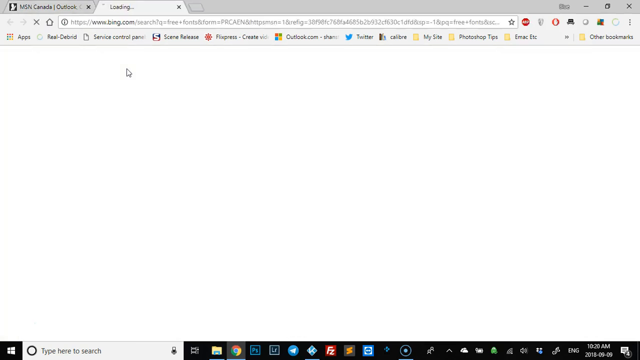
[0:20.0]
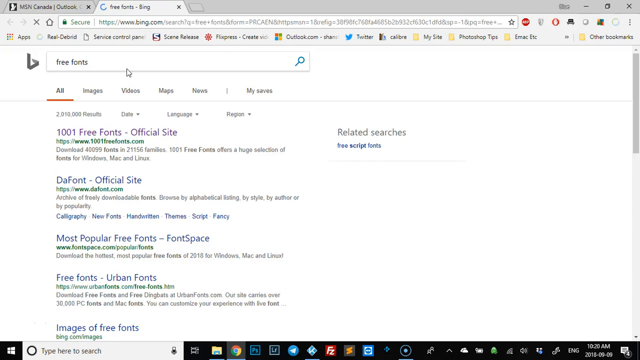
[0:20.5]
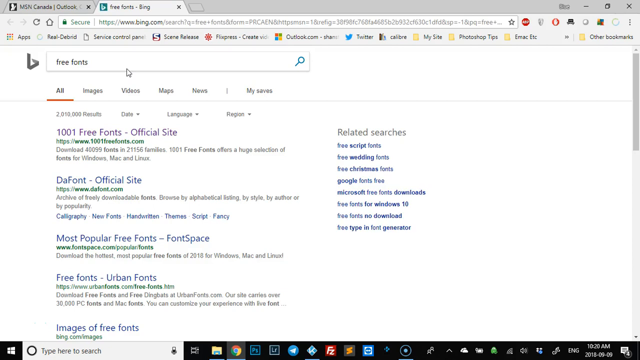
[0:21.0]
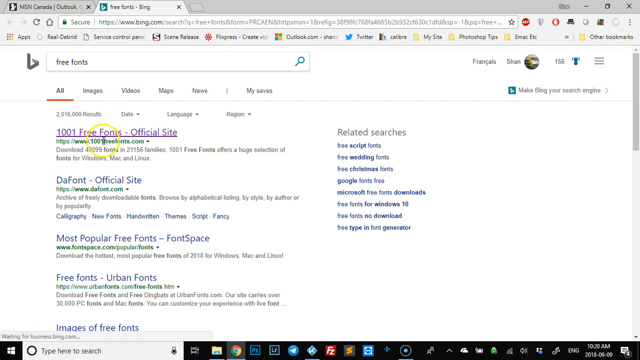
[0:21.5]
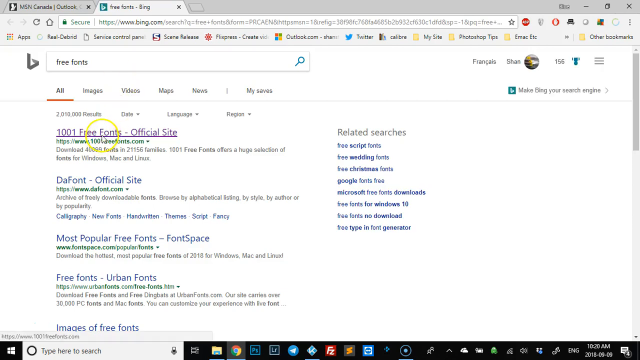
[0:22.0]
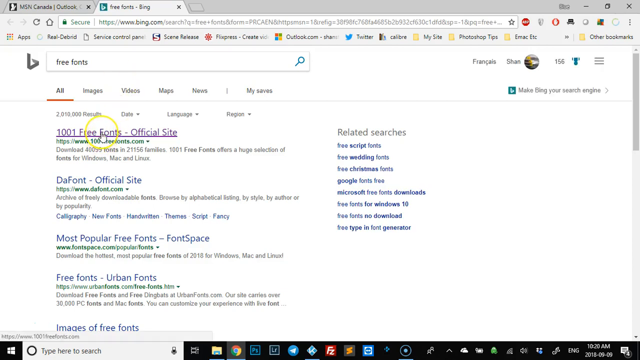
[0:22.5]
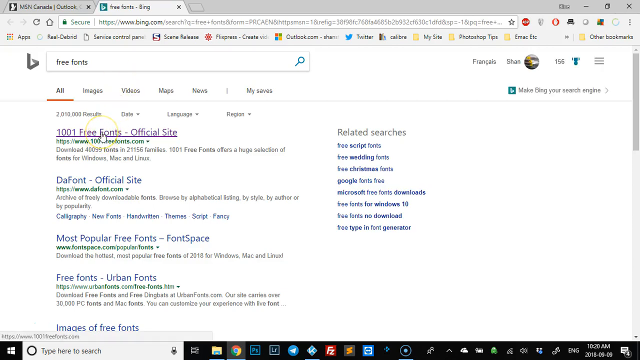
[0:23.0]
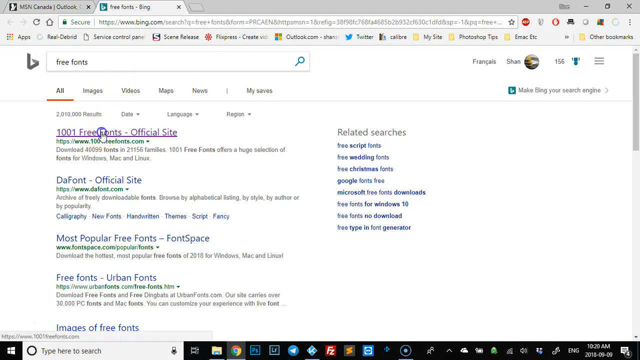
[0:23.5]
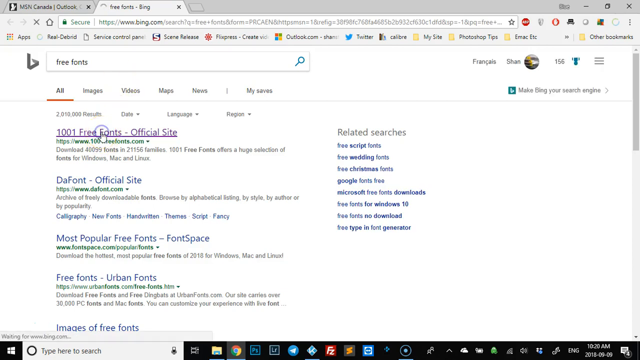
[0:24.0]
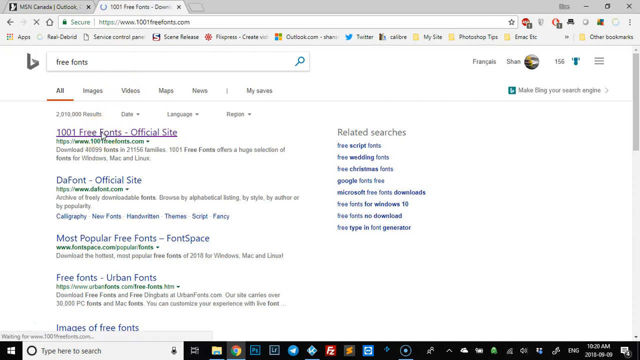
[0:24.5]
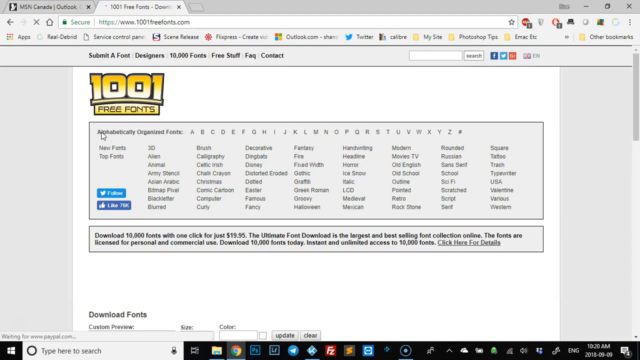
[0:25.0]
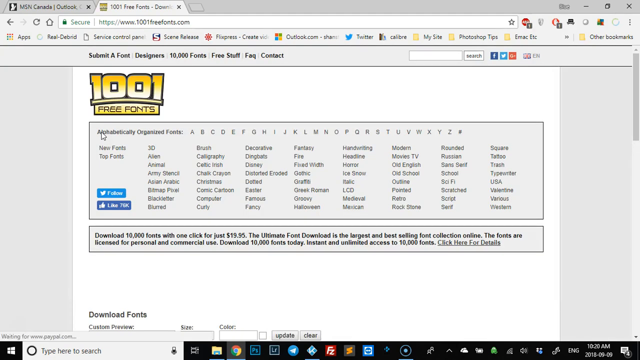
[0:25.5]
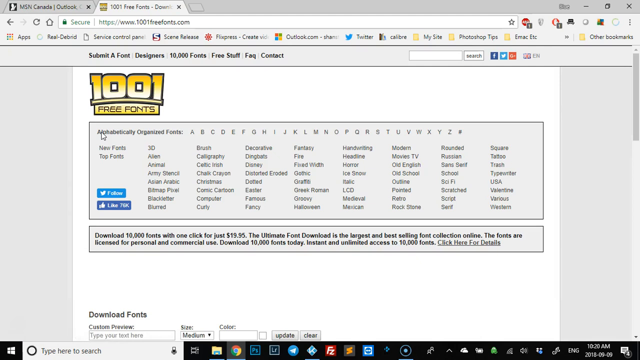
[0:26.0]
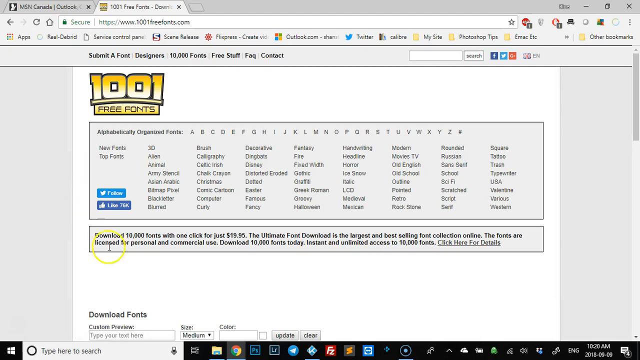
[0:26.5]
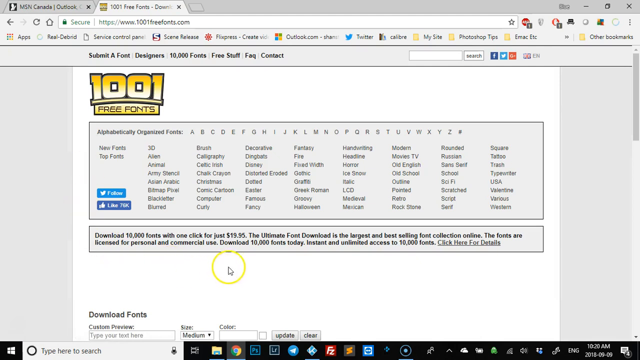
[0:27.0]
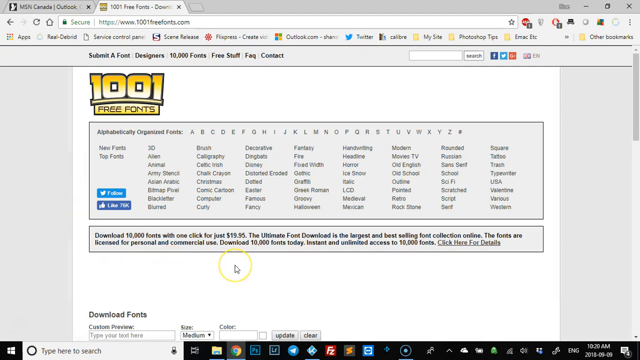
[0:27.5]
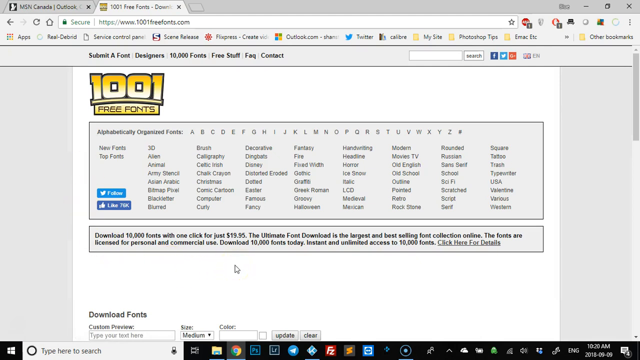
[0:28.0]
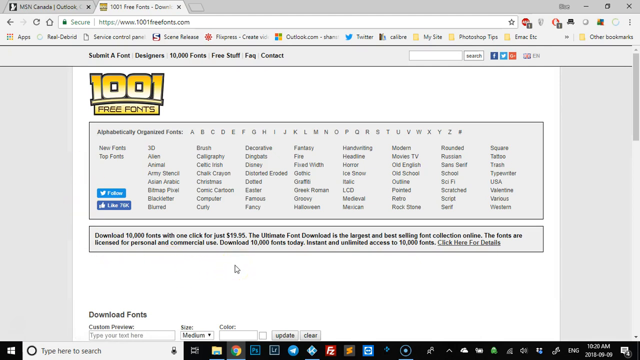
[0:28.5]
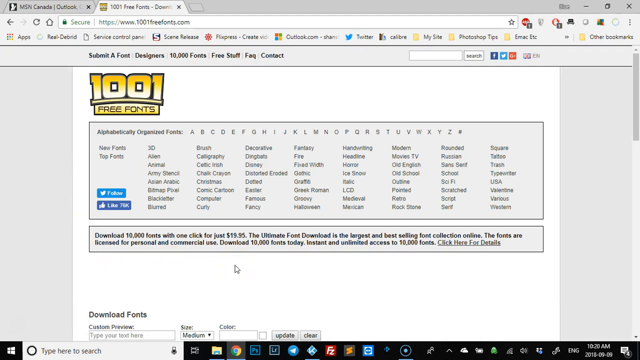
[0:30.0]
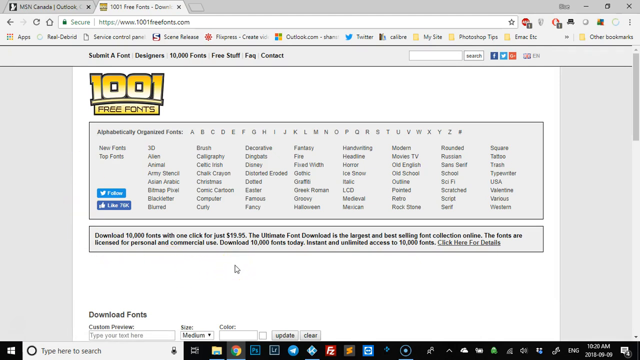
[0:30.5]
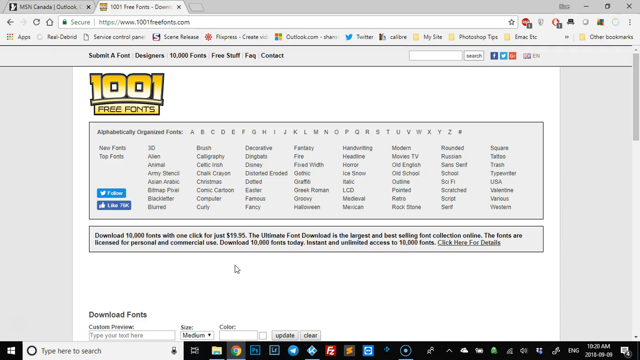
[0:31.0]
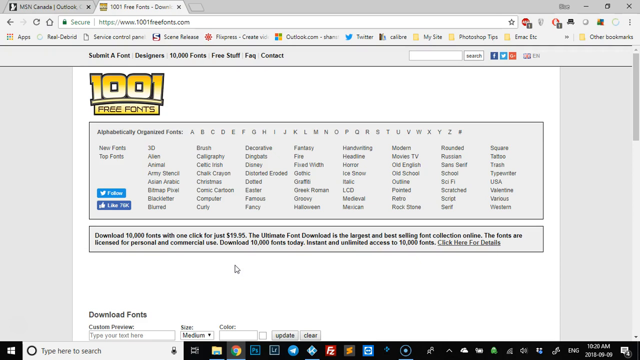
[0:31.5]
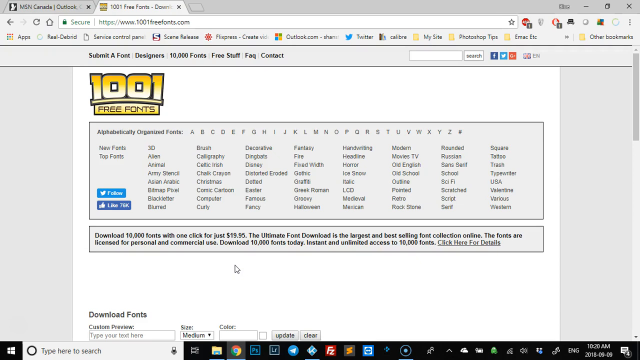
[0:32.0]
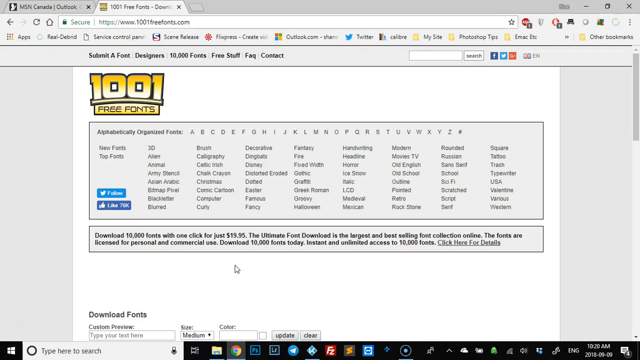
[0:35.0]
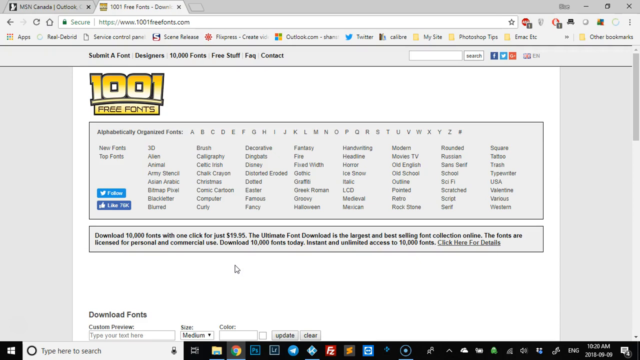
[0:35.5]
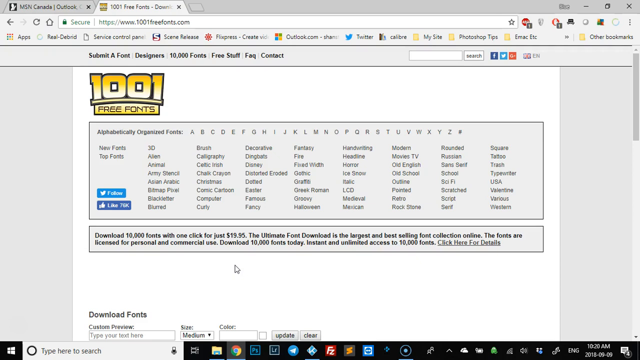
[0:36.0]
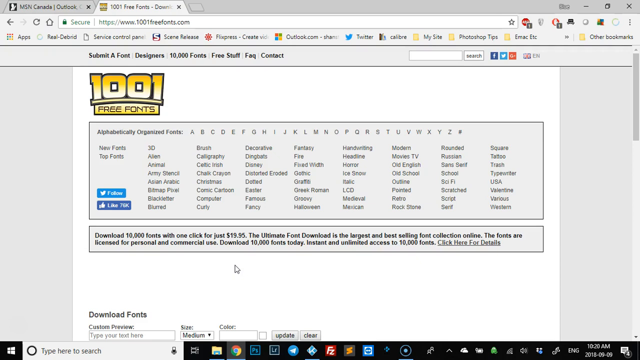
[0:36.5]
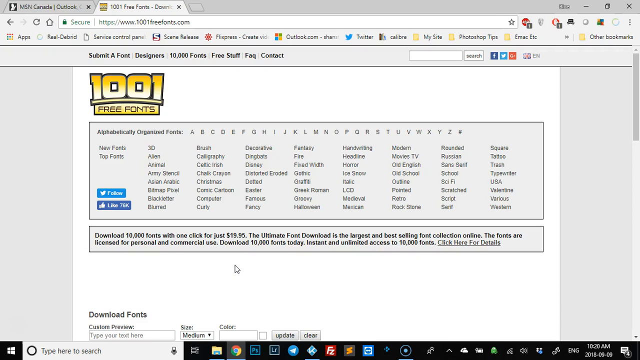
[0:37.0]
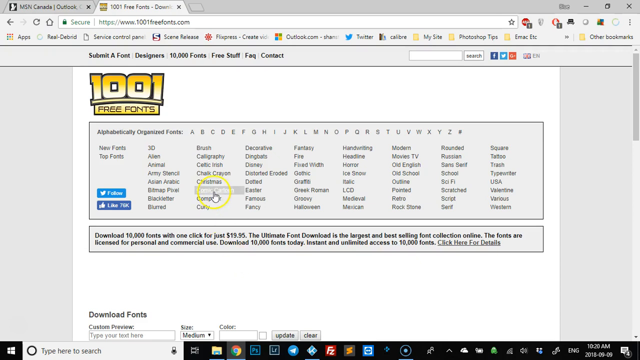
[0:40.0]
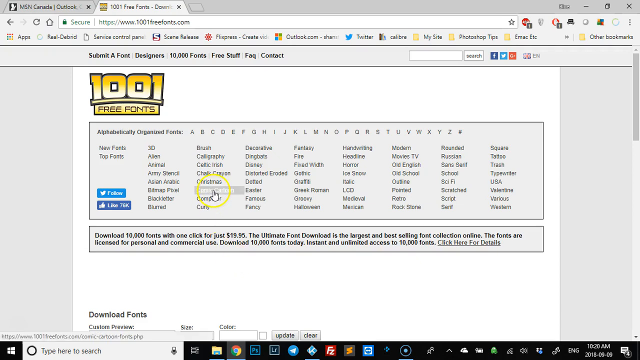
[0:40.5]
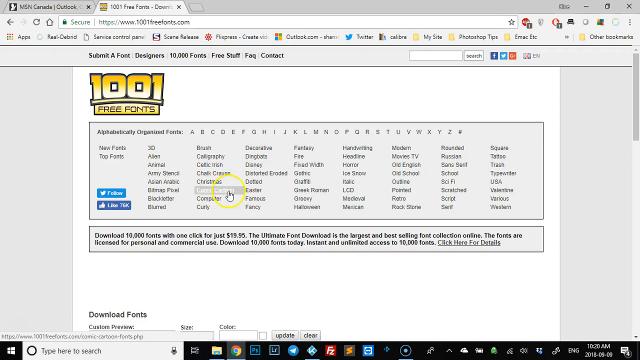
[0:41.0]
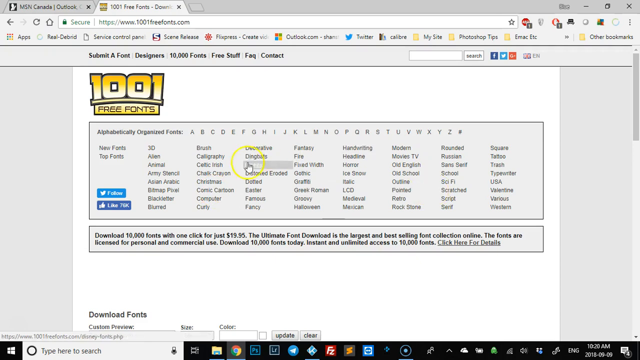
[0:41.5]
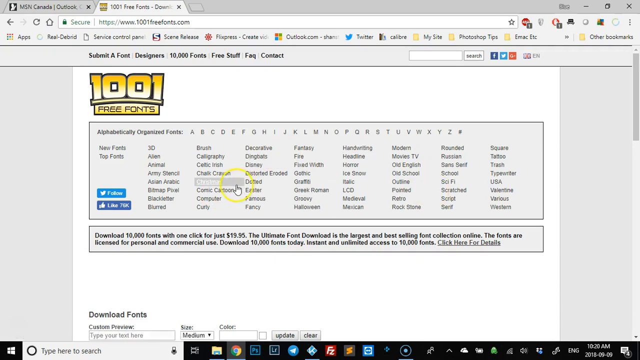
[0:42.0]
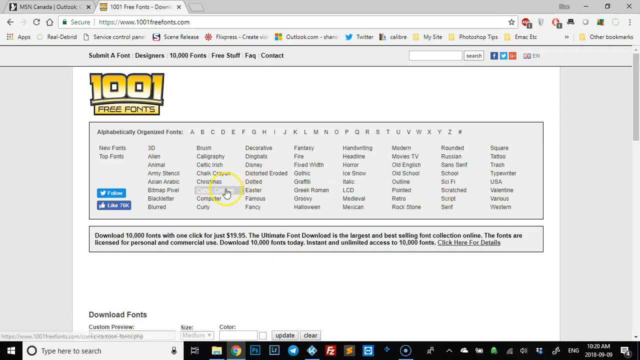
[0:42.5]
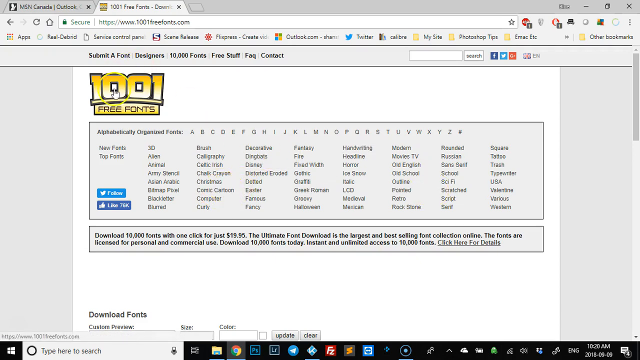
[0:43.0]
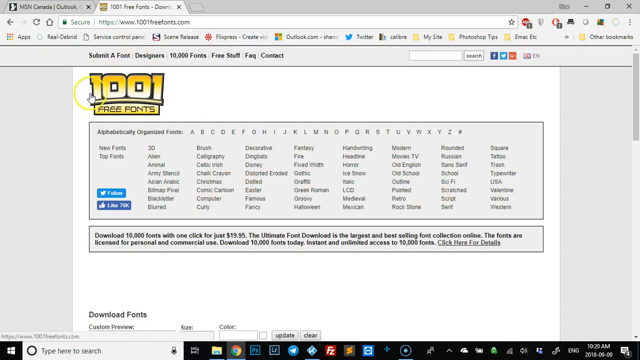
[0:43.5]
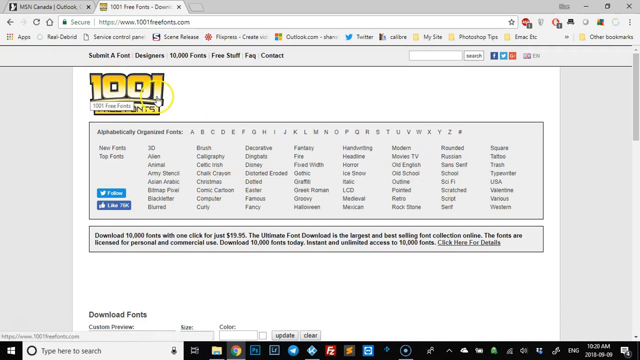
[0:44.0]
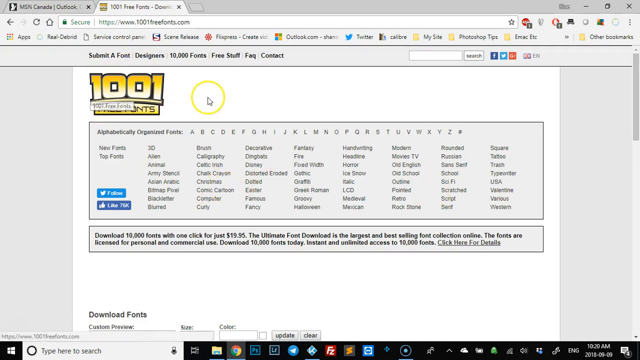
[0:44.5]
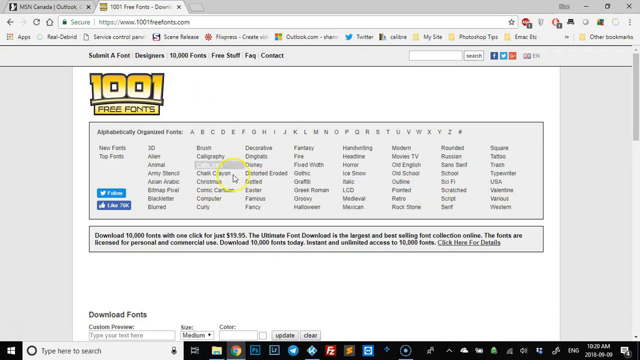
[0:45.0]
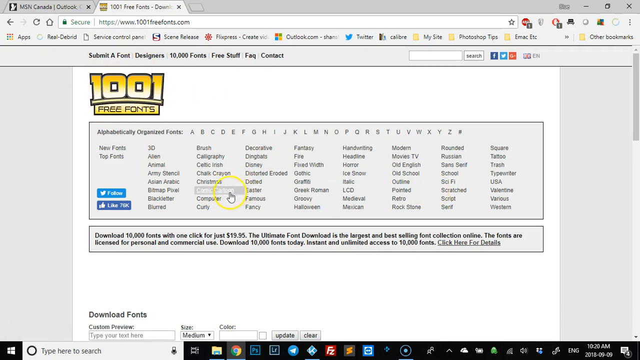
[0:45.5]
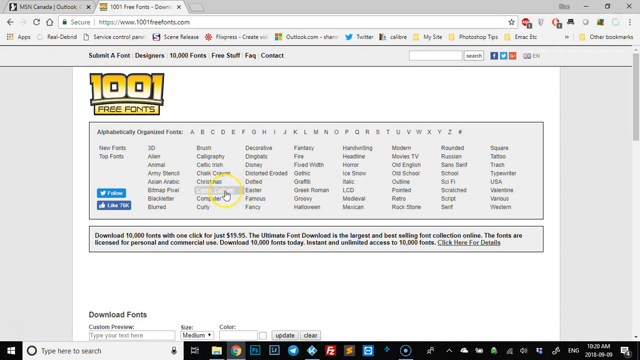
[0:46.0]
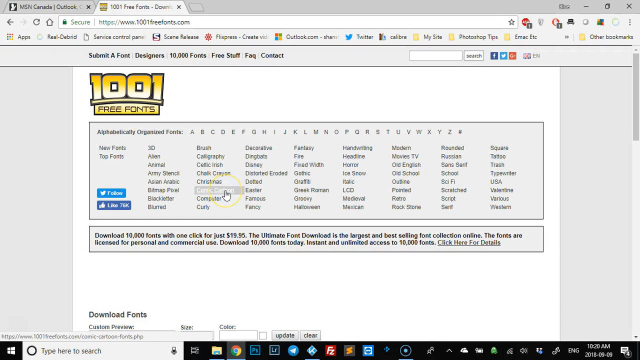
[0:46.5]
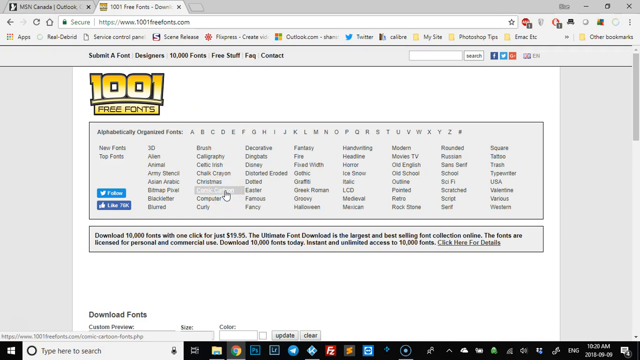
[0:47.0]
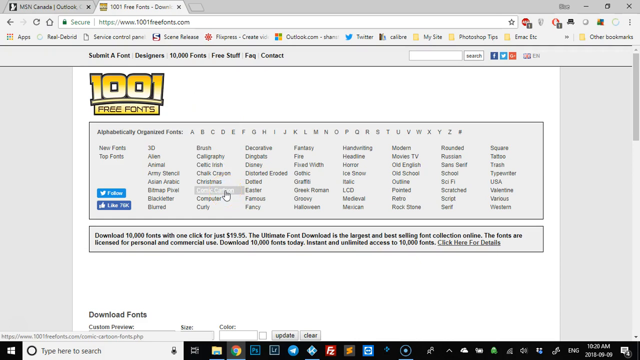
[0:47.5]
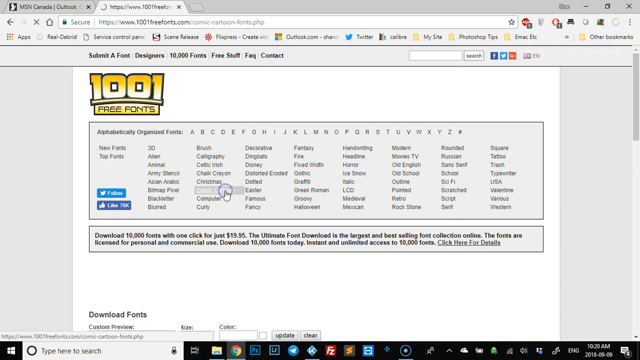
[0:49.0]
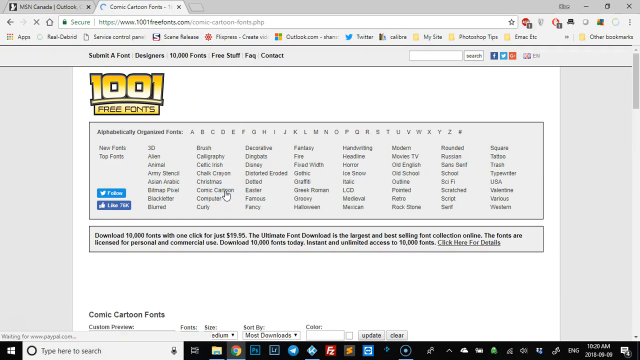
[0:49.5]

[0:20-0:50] A page that is initially blank starts to load, and "free fonts" appears in the search bar at the top of the page. On Bing's search results page, a result says "1,001 free fonts" with "- official sites," and underneath there is what seems to be a web address. The person uses the mouse to highlight that link and clicks on it. The 1,001 Fonts free fonts home page opens, and the person navigates down almost to the bottom of the page, where various fonts are shown, supposedly organized alphabetically, apparently for creating labels. The person goes over the one that says "cosmic cartoon" and seems to be really interested in it. Multiple selections can be seen.